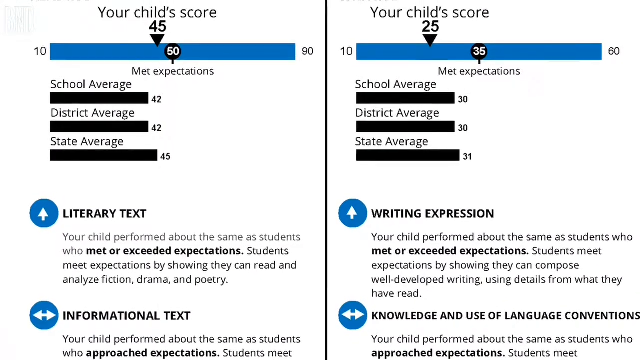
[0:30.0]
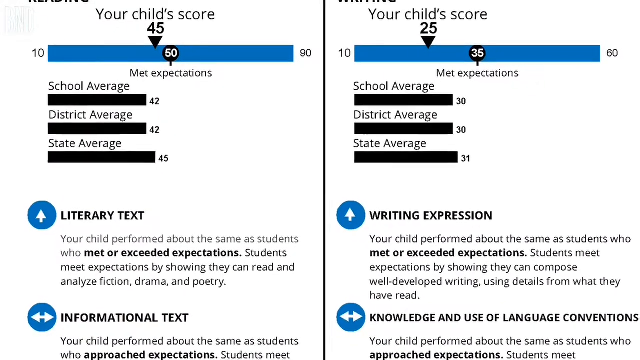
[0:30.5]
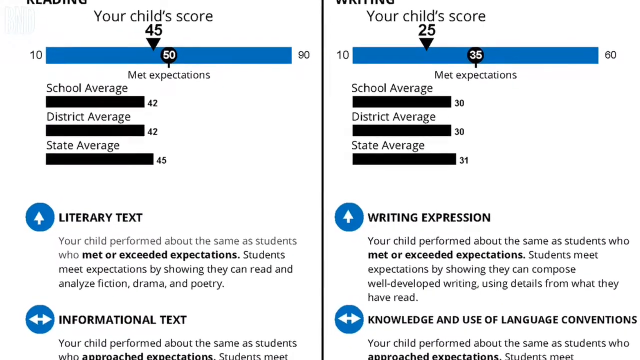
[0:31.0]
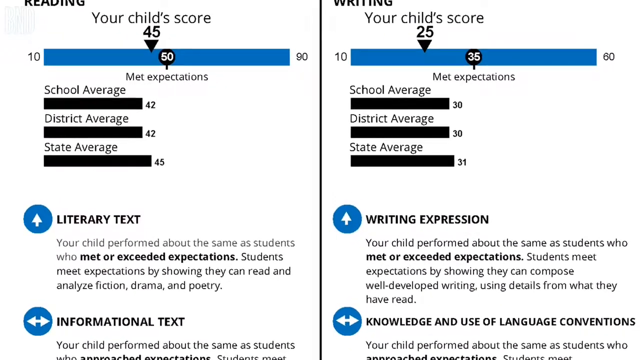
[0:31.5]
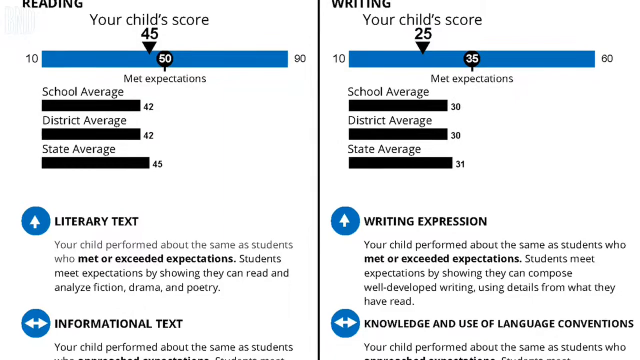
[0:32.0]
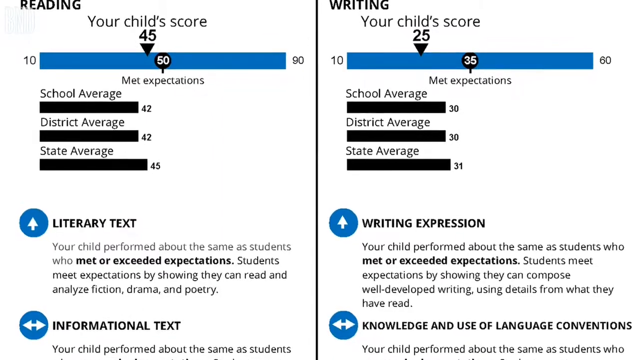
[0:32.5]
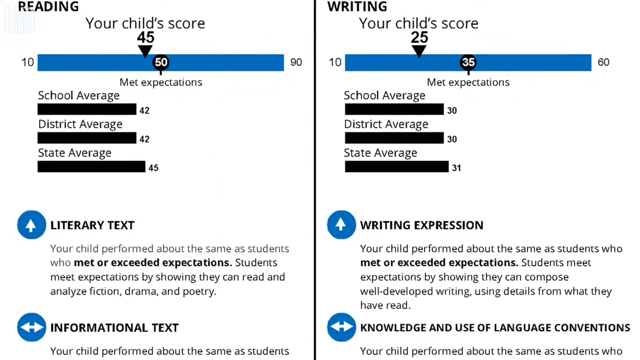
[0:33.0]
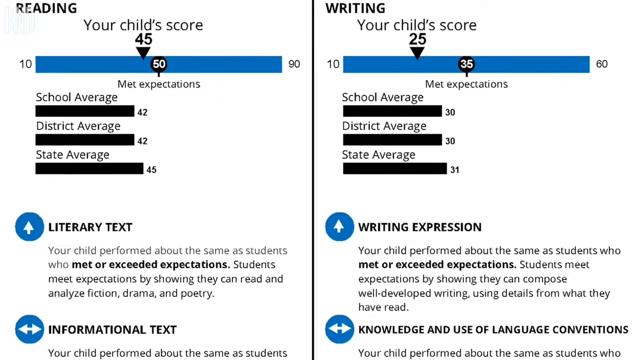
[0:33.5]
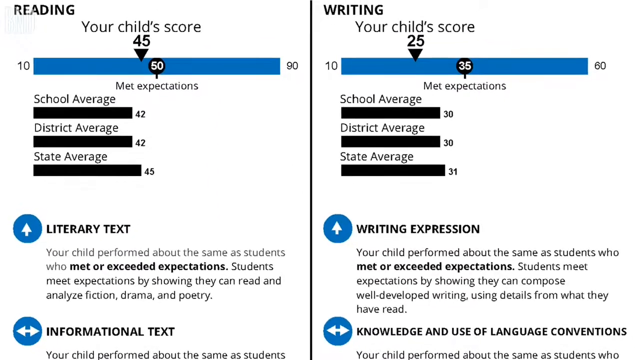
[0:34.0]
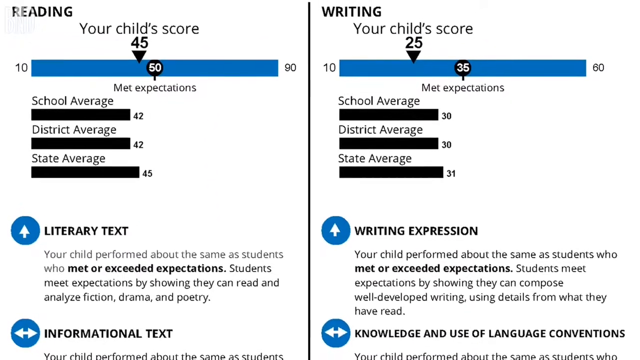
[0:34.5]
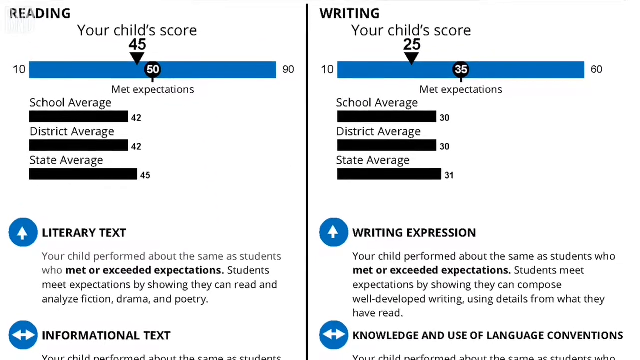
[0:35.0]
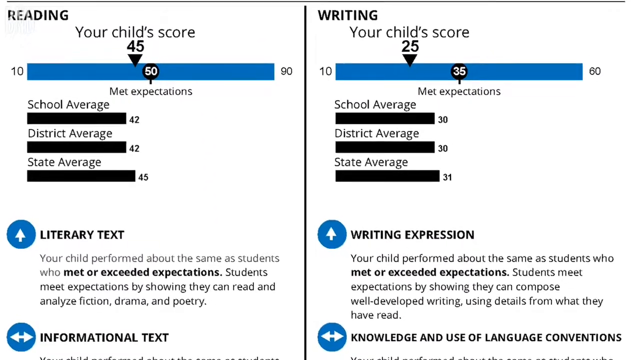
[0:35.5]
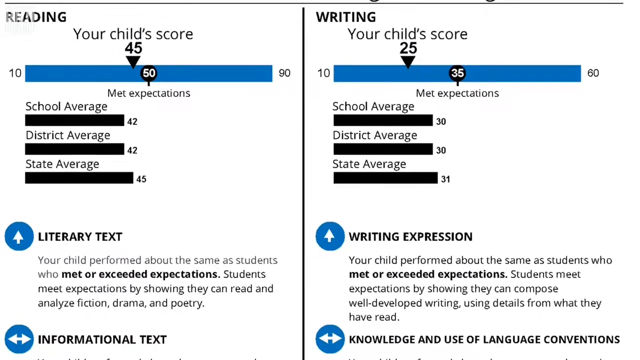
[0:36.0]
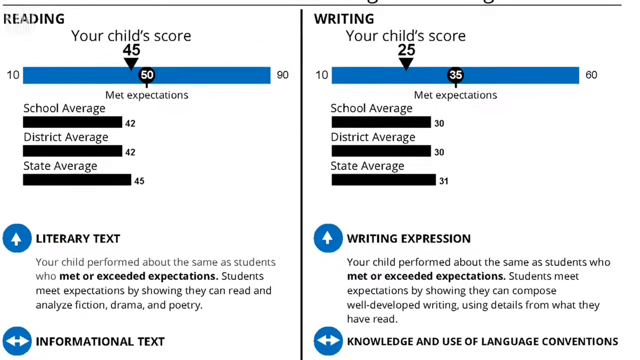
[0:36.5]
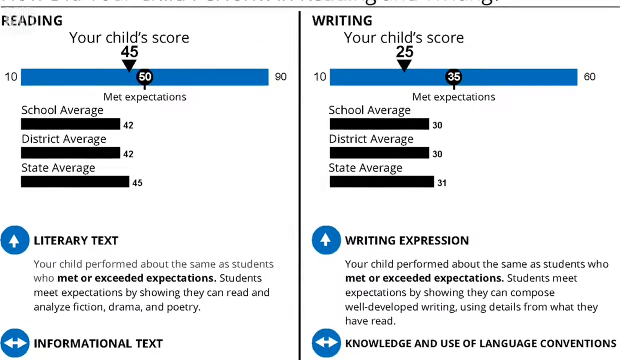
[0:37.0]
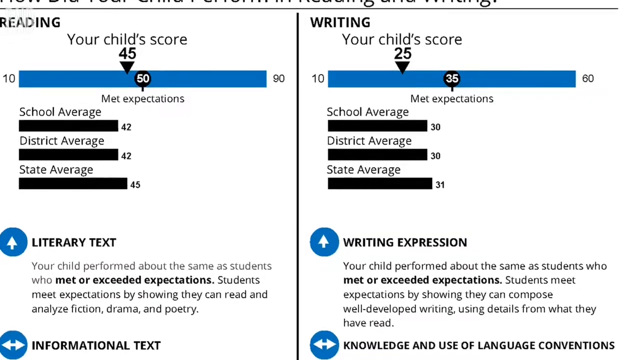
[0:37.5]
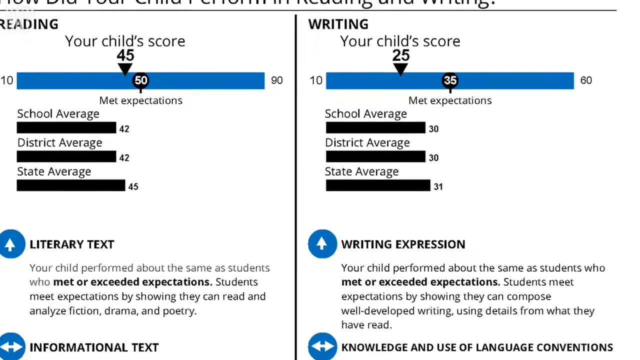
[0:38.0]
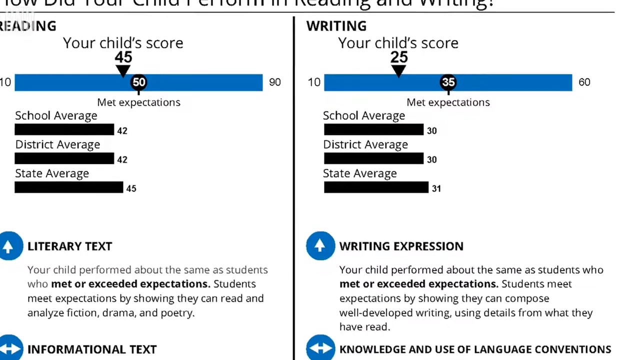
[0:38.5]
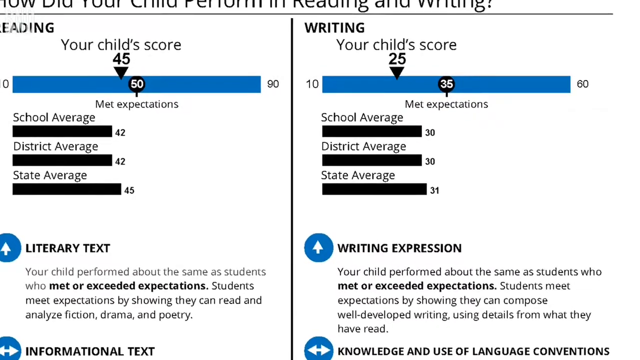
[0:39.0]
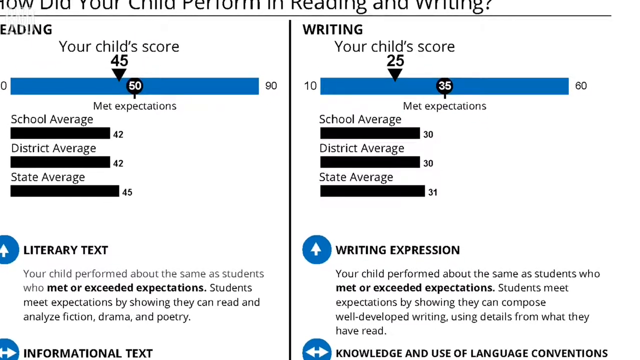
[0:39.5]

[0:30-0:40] A comparison of two scores appears. The child on the left has a score of 45 out of 90 and the child on the right a score of 25 out of 60, with expectations of 50 on the left and 35 on the right. School and state averages are also shown. Below are the labels "literary text" and "informational text," and on the right "writing explanation" and "knowledge and use of language conventions." The camera pans, showing that these two topics are the child's reading and writing scores. The video then appears to address how the child ended up here before it cuts.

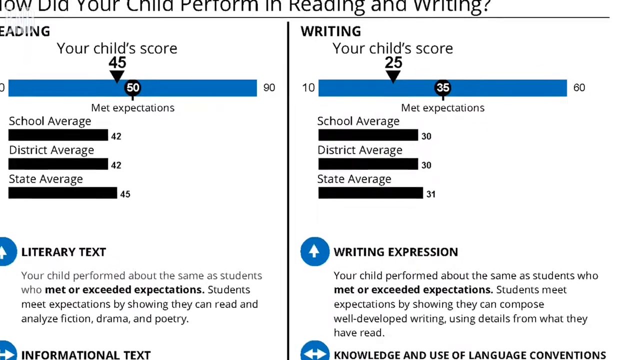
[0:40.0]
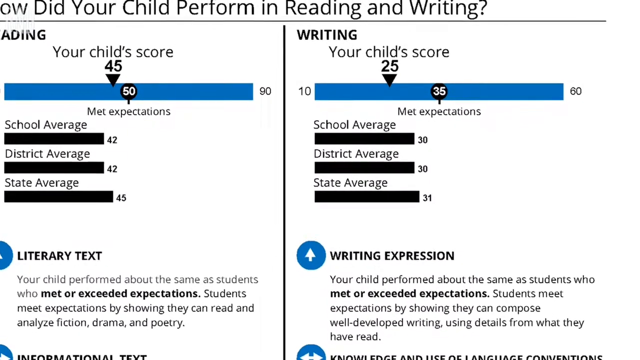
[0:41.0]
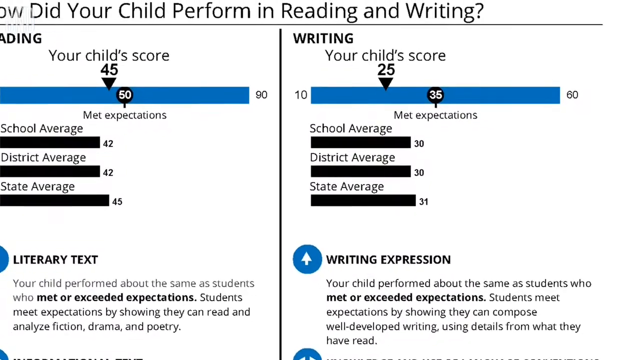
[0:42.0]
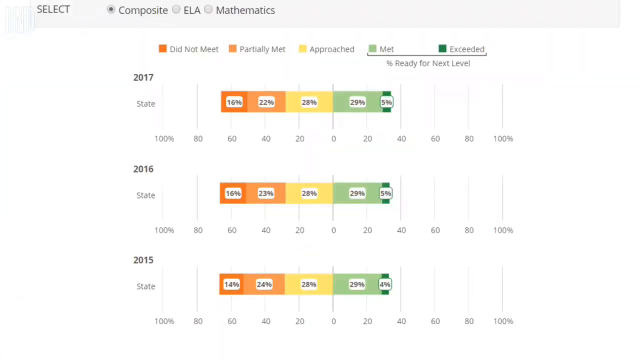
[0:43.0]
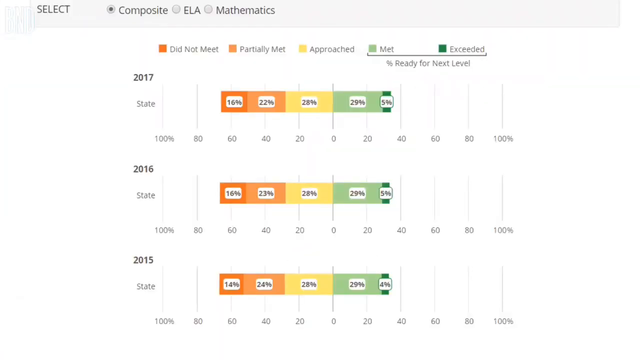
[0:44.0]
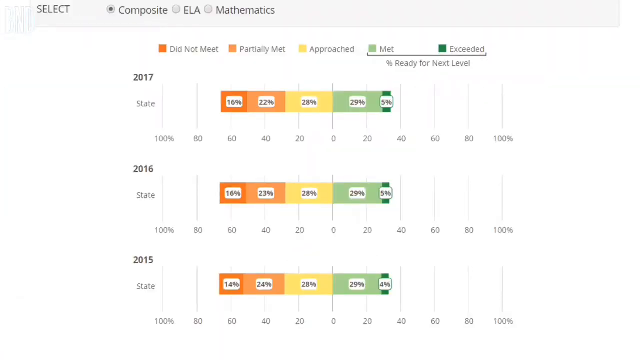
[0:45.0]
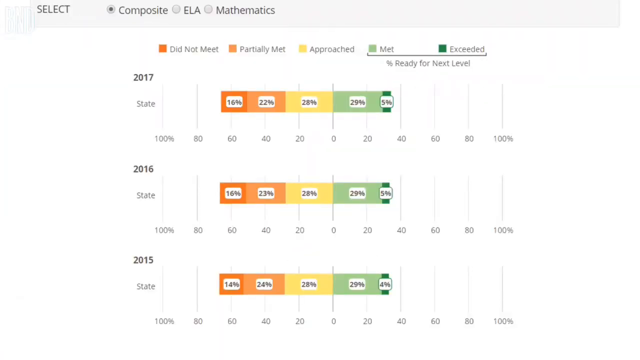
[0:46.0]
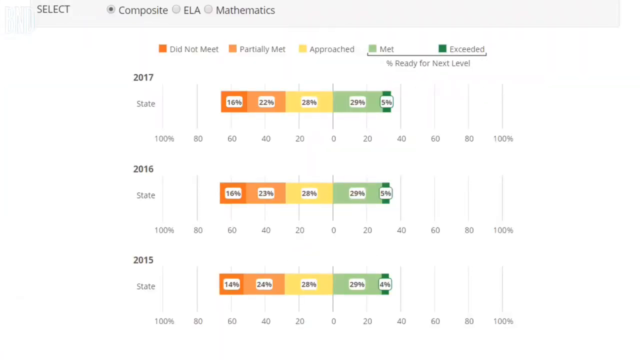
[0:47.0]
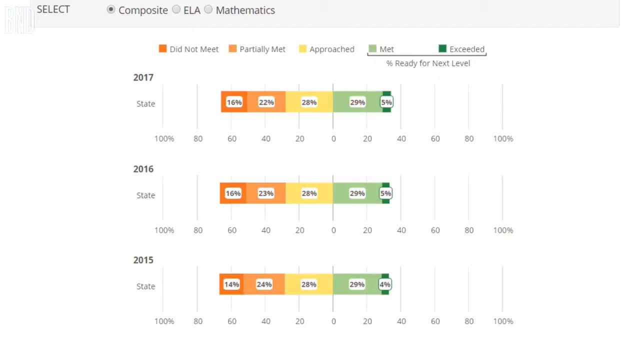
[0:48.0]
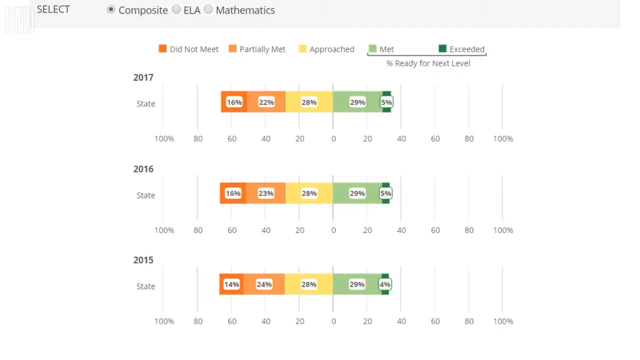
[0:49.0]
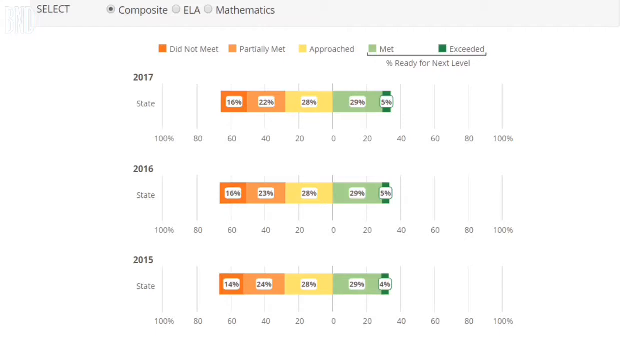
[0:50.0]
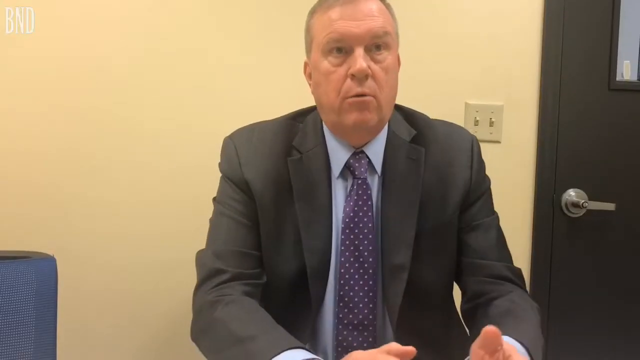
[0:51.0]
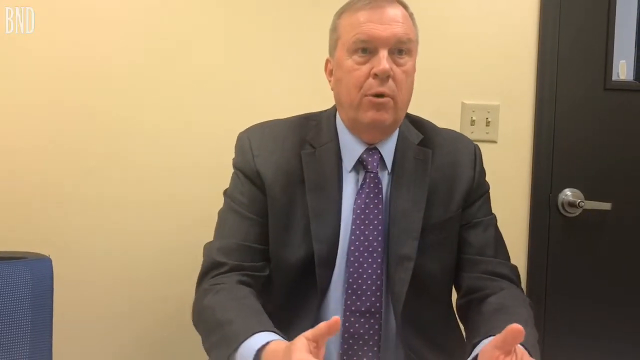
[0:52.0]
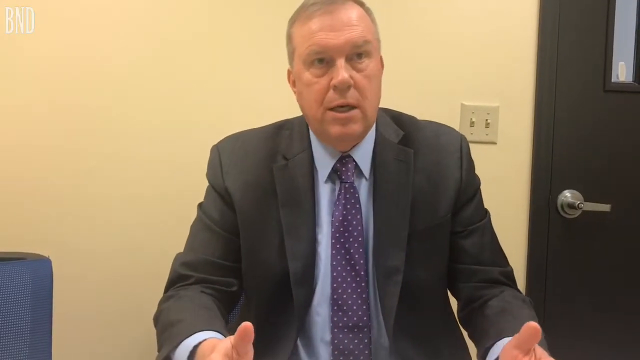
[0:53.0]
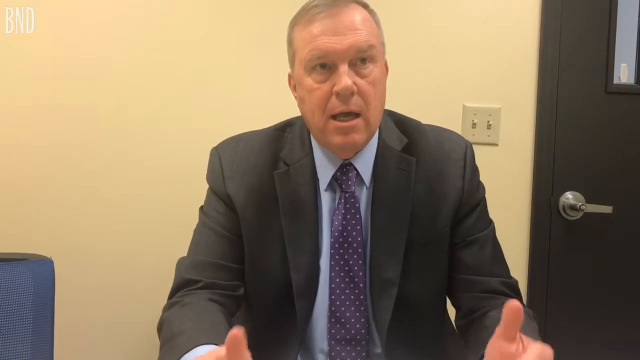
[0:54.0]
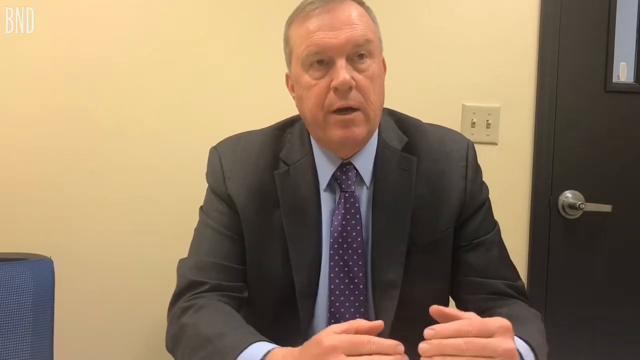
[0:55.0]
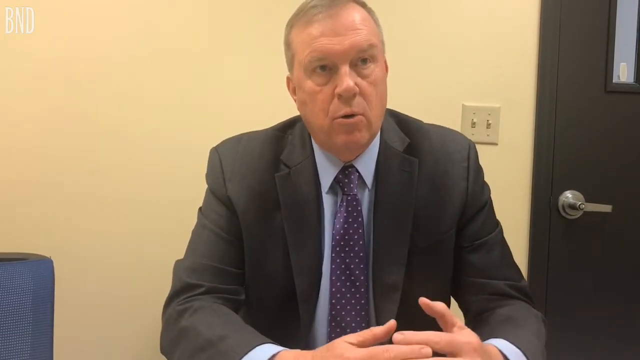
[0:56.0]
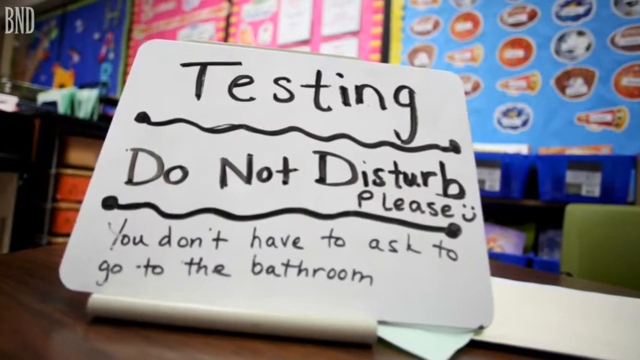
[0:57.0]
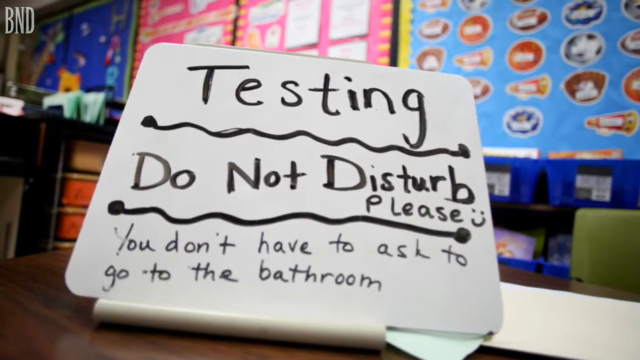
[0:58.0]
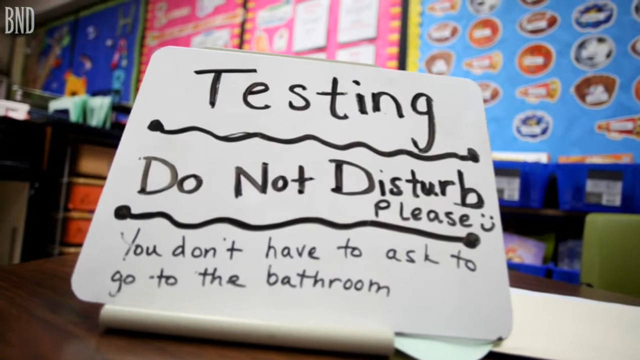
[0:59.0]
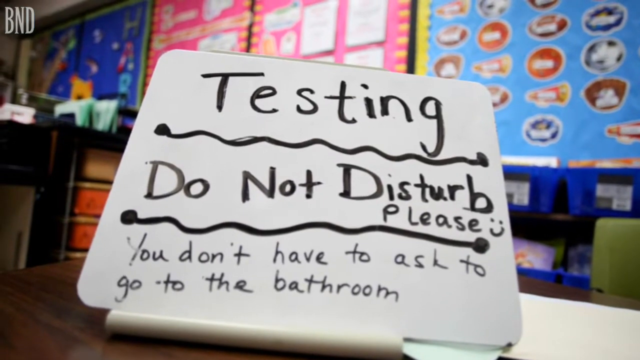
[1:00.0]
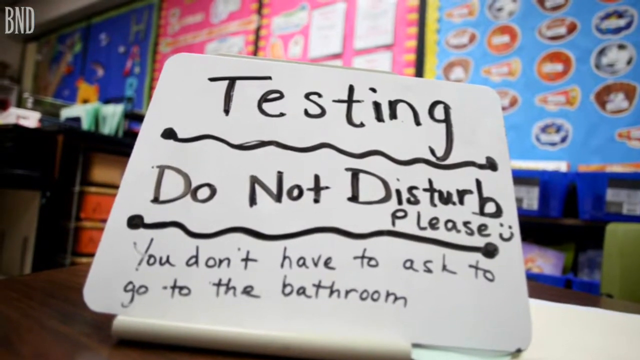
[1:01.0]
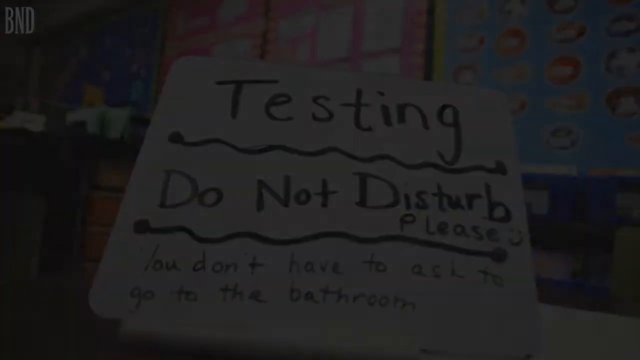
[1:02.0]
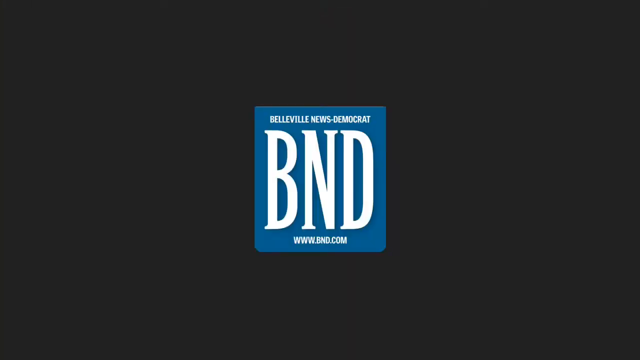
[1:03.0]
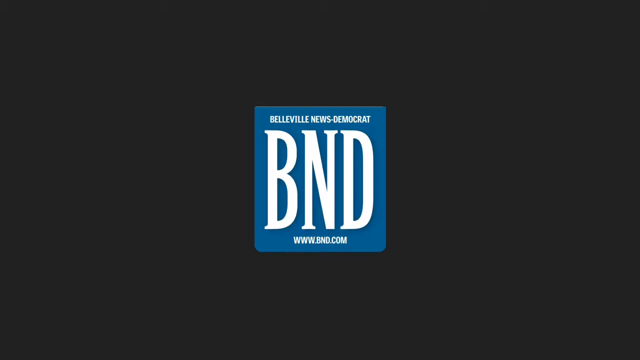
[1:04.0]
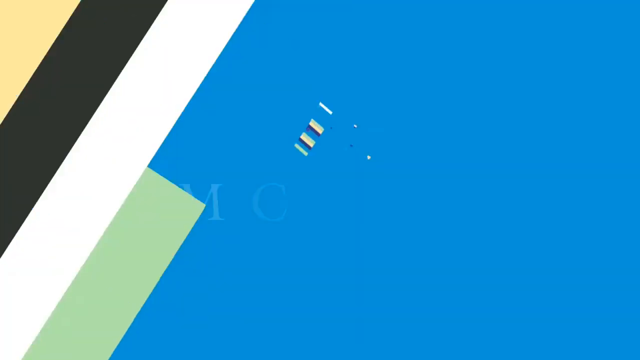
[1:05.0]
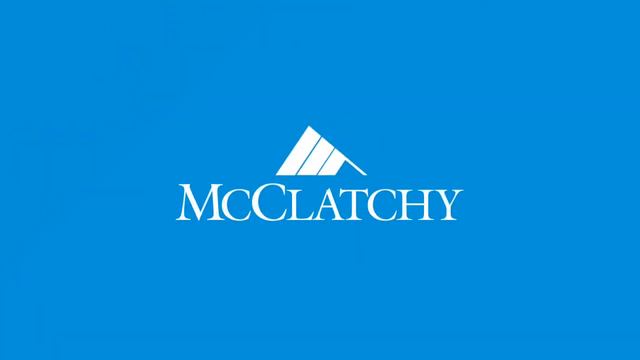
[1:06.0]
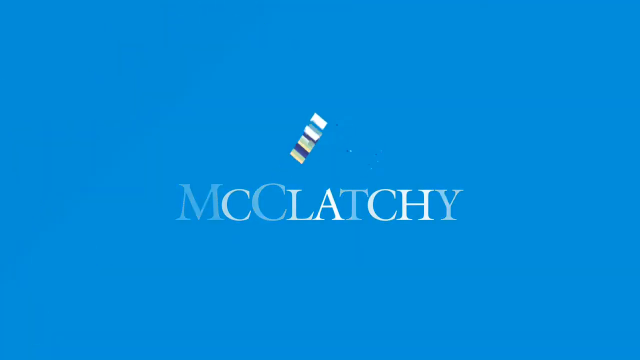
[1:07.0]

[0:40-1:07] The child's reading and writing performance is shown, indicating that the child did not reach the expected level. On one side, the child is shown to have performed about the same as students who met expectations by showing they can read or analyze fiction, drama, and poetry; on the right-hand side, the child performed about the same as a student who met or exceeded expectations for writing. Another chart follows, apparently showing the percentages of students who did not meet, partially met, approached, met, and exceeded expectations in 2017, 2016, and 2015. In every year more students partially met expectations than exceeded them, and 16% and 14% did not meet them, with the 14% in 2015. An old man in a suit then sits on a chair in what looks to be his own office, with a white background and a board. A classroom with a board in the background follows, with text in the middle of the screen, and then the BND abbreviation appears before the video ends.